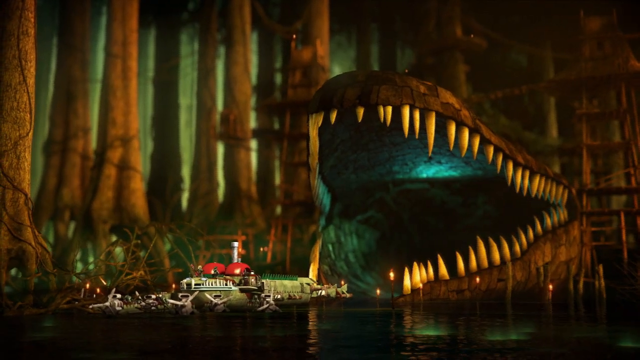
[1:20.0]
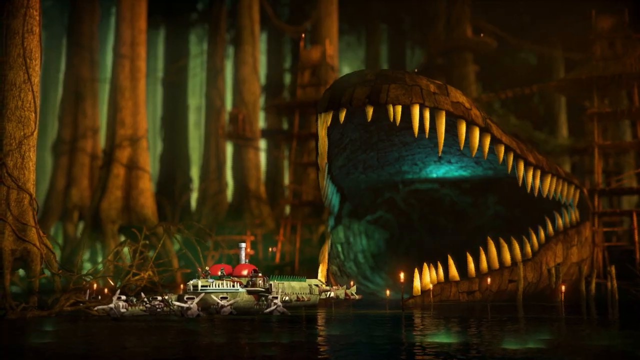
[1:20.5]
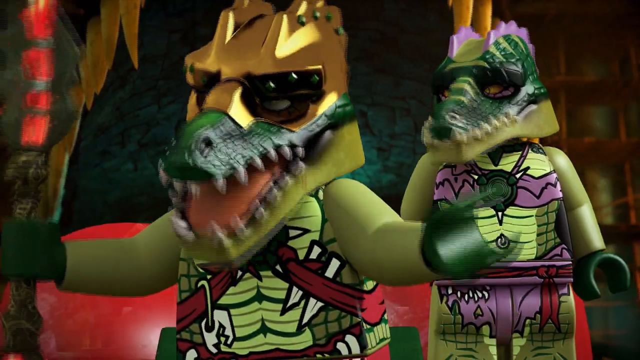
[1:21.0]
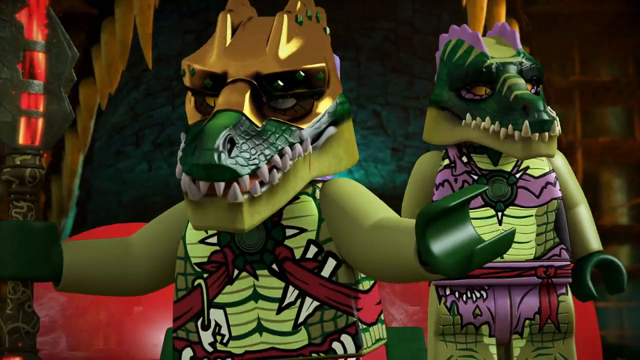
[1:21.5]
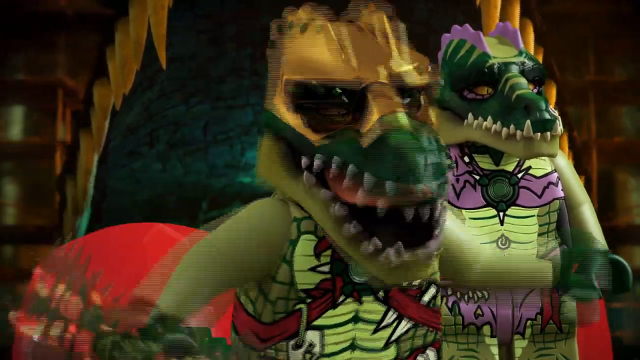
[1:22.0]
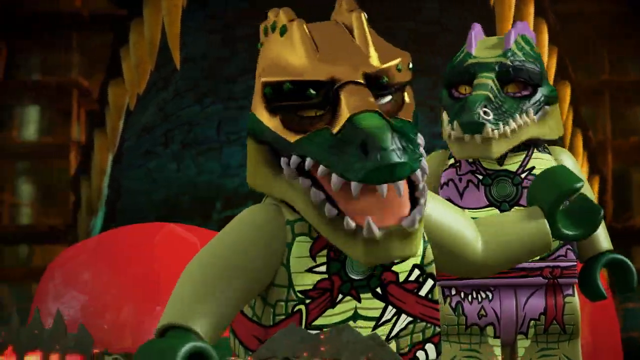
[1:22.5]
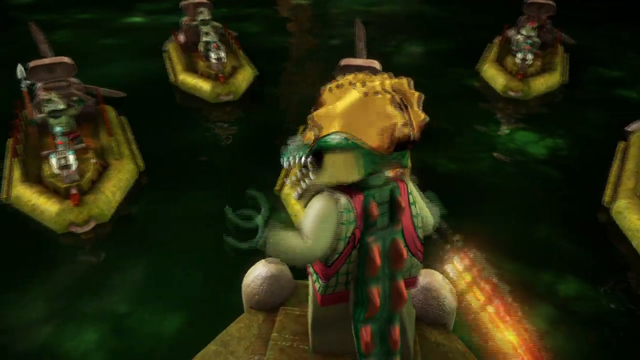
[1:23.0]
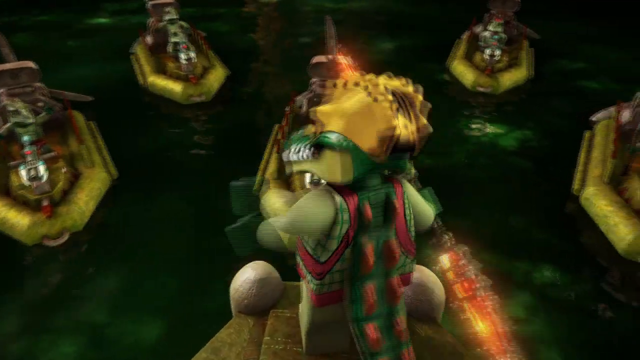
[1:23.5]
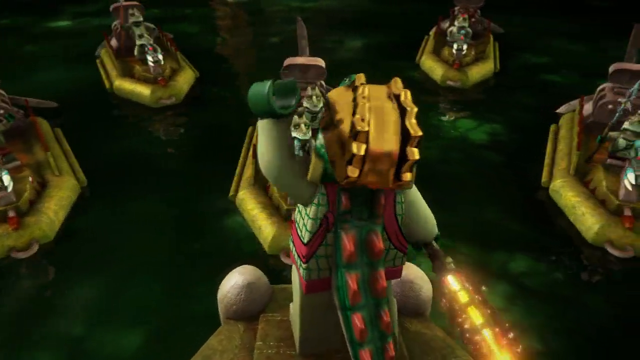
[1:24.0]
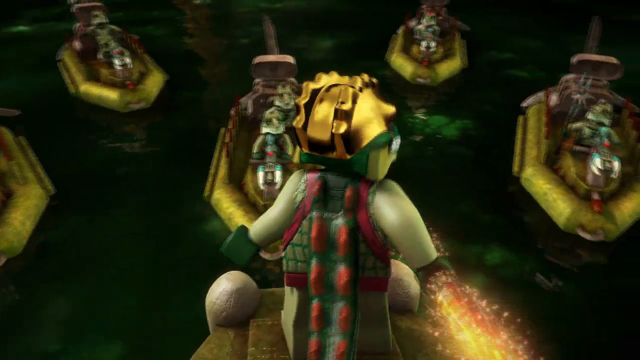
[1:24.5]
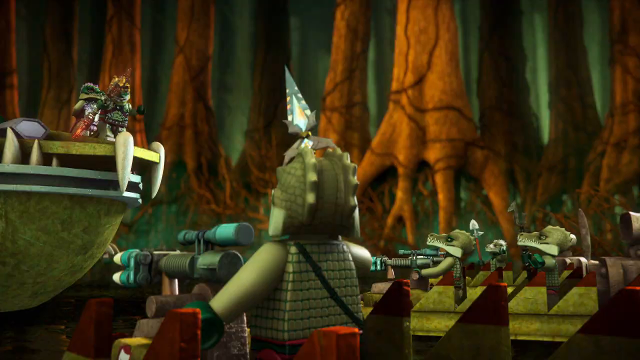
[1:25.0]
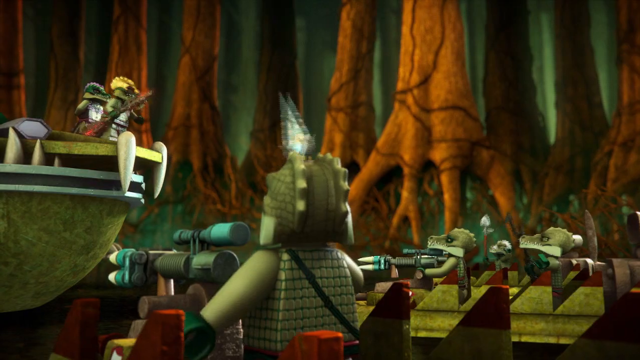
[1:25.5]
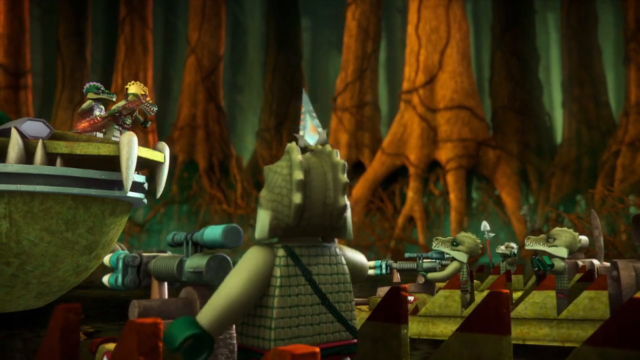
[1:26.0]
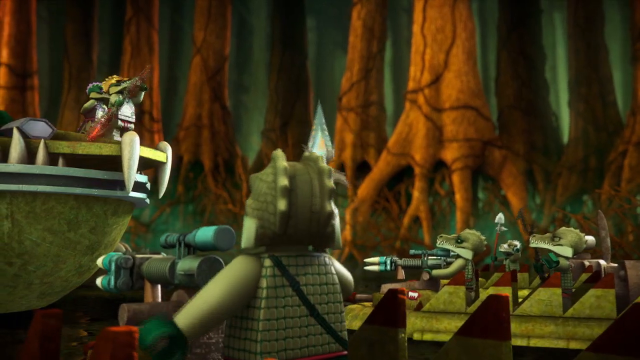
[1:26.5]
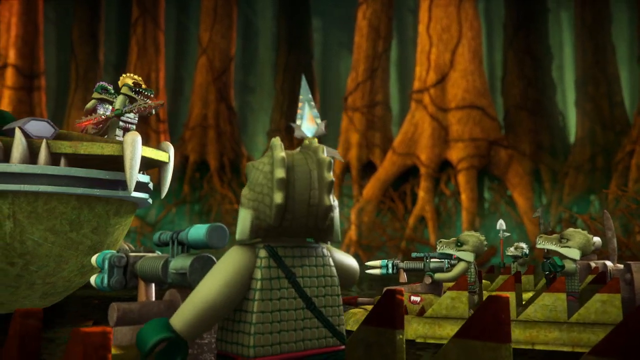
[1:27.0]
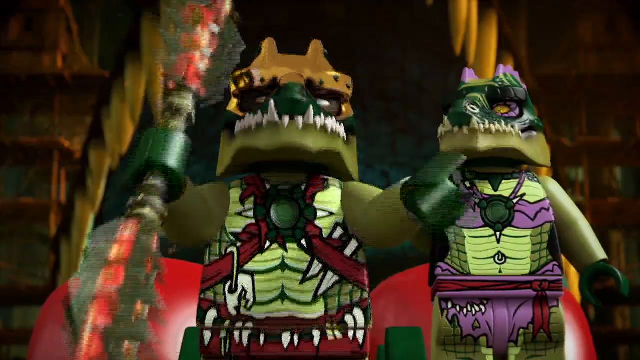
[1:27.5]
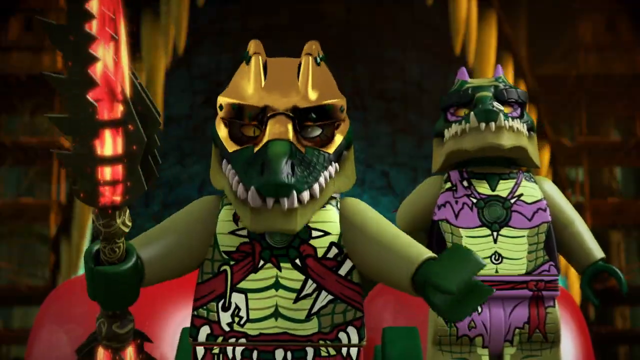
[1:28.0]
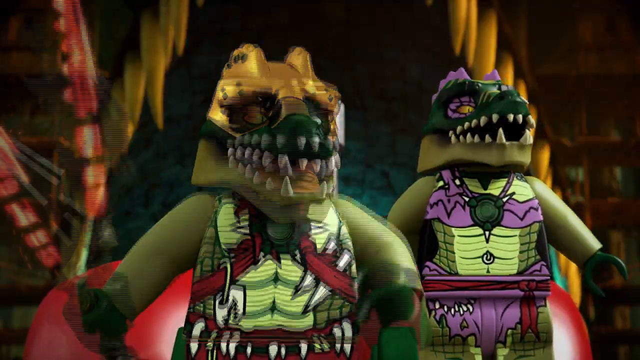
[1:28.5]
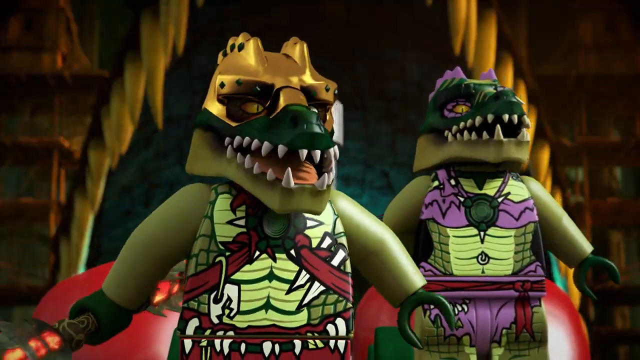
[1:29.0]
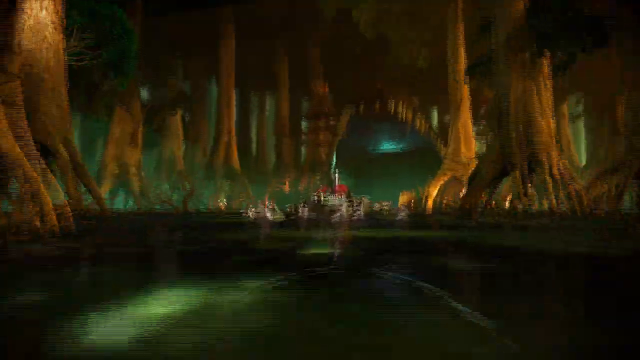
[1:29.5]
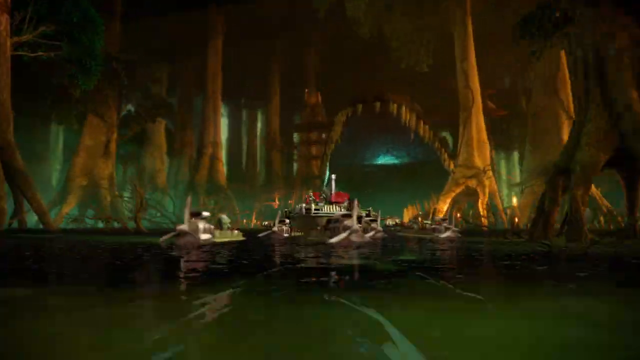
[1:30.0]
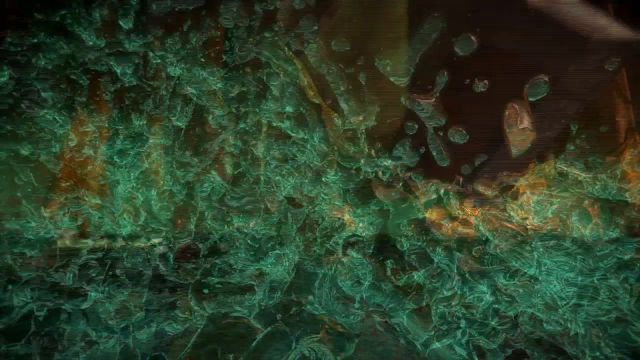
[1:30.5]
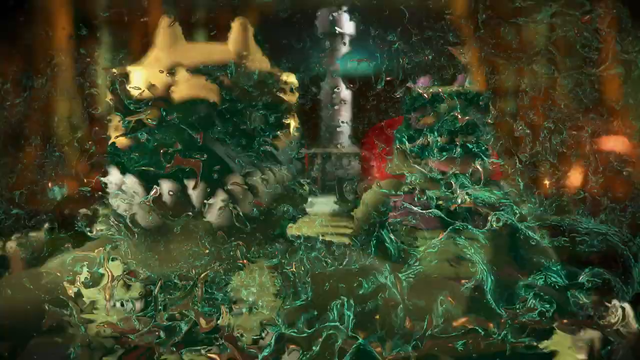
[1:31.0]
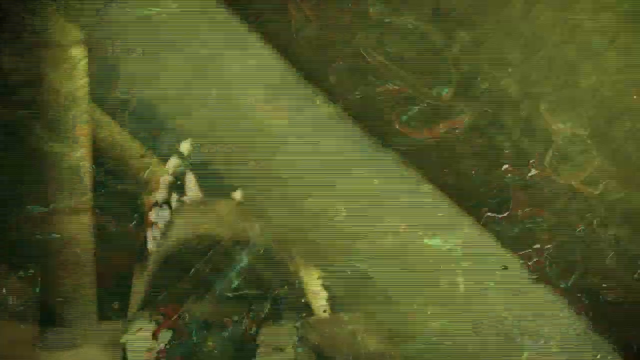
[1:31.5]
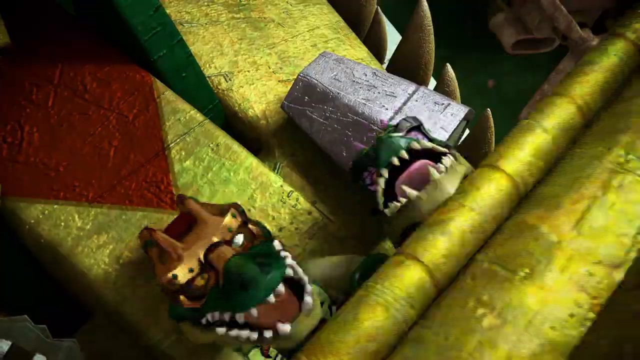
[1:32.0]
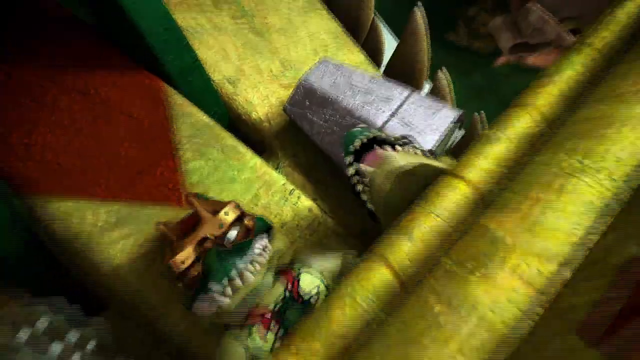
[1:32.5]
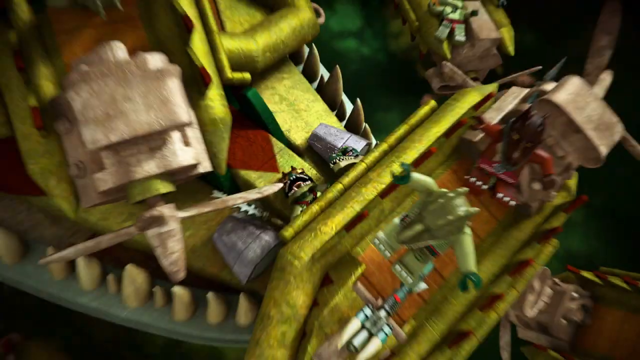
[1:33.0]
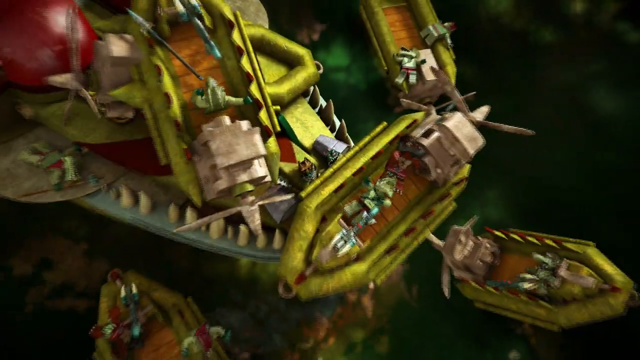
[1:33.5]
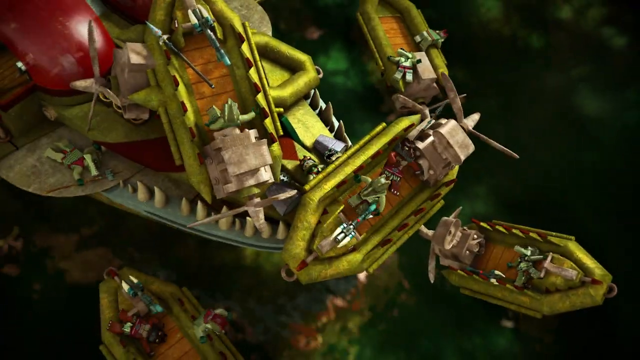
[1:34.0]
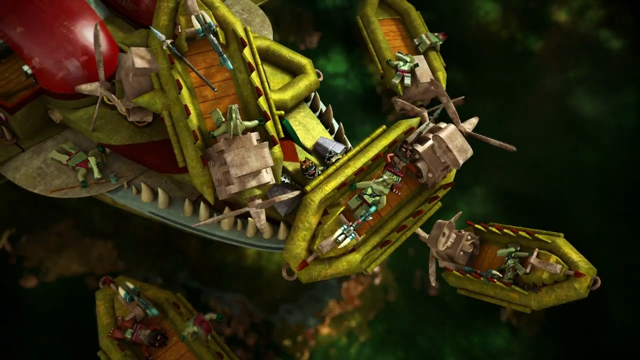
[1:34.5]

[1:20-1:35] Another clan of warriors appears, this time crocodiles, who also look like they are waging war against a different clan of animals. The crocodile ruler has a golden crown on his head and wears an armor outfit; he holds a big spear in his right hand and waves it about as he gives an animated, bellicose speech to his subordinates, who are in the water in kayak-like boats. His queen wears a gown with a purple trim. They are standing behind a large archway shaped like the head of a crocodile with its mouth open and lots of teeth along the rim. Toward the end of the speech, a large boat crashes into the lagoon and lands on the ruler and his queen, who lie flat, squashed under its weight.